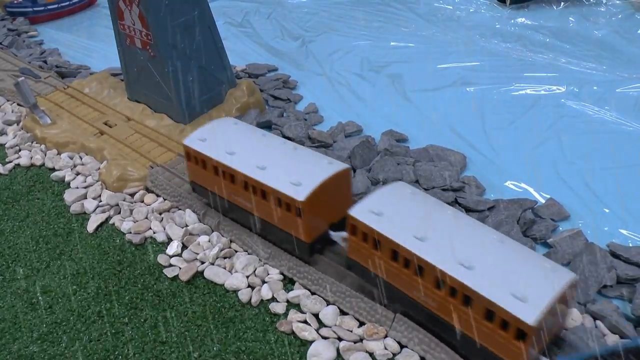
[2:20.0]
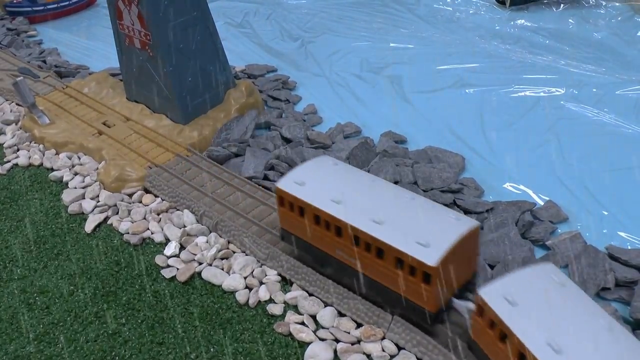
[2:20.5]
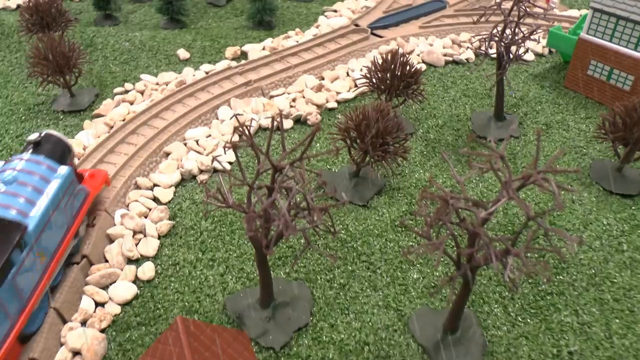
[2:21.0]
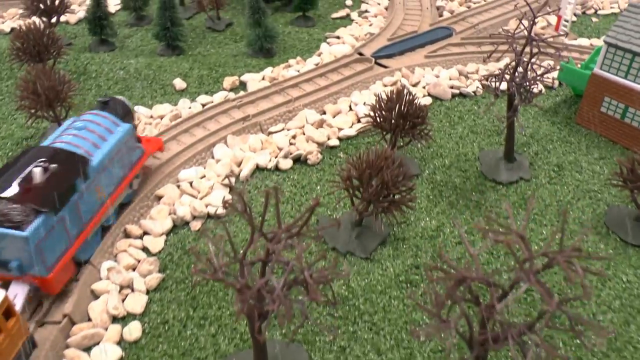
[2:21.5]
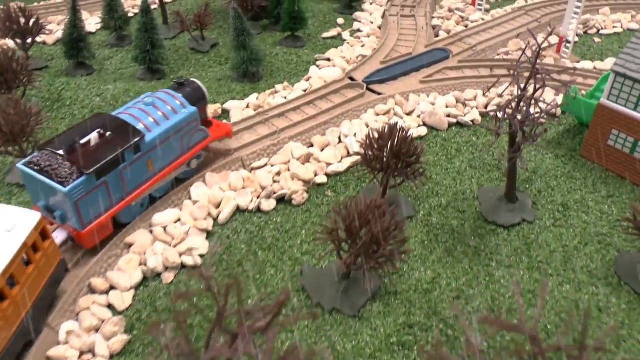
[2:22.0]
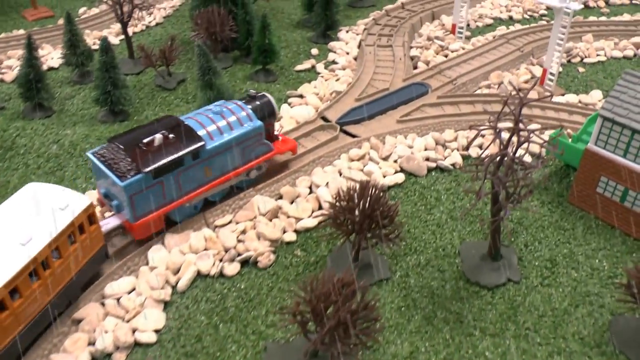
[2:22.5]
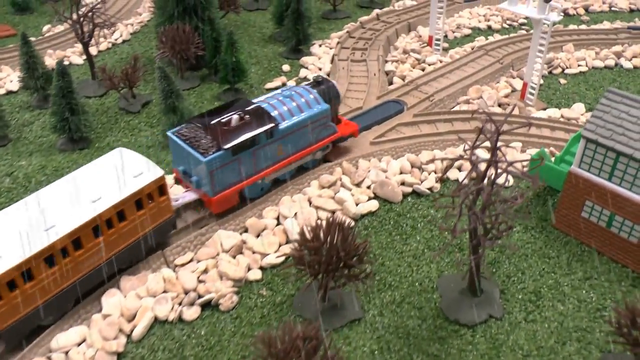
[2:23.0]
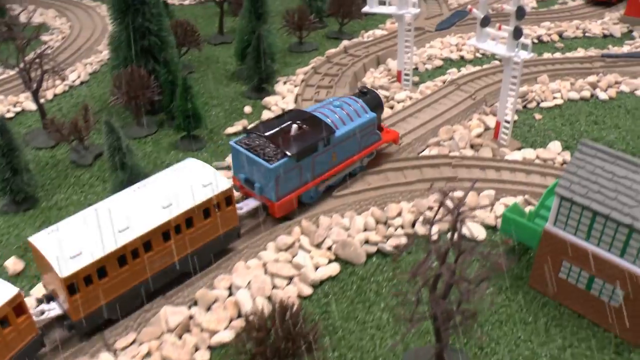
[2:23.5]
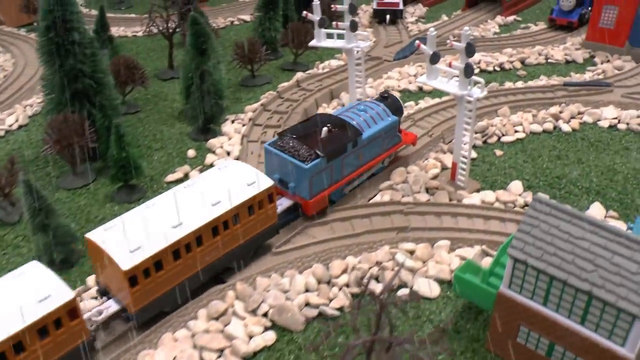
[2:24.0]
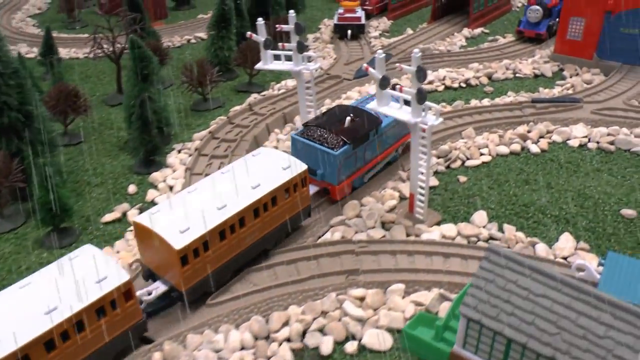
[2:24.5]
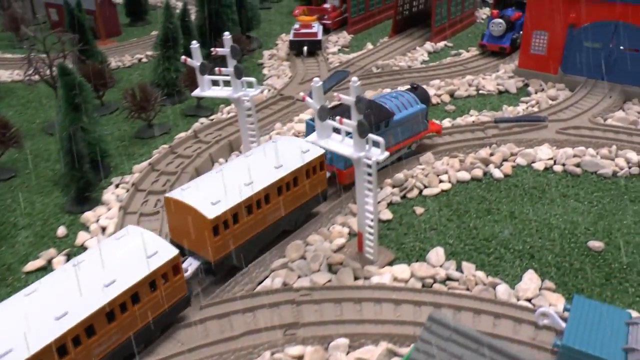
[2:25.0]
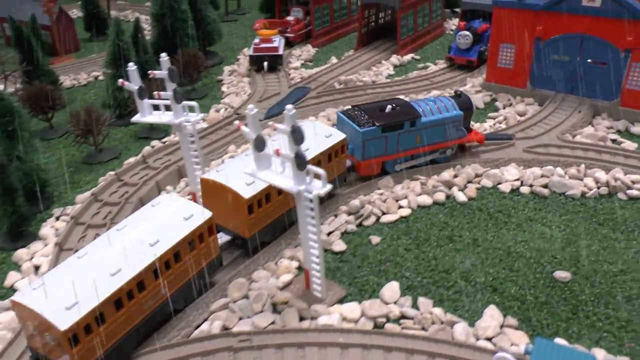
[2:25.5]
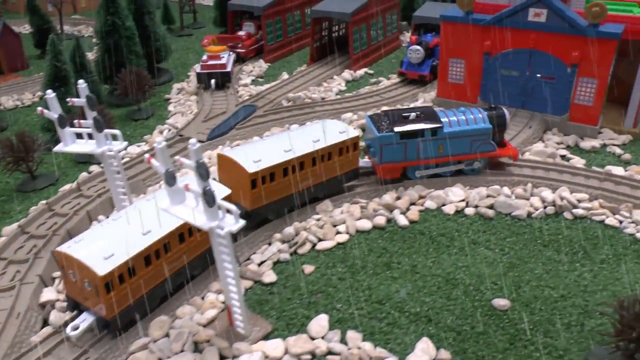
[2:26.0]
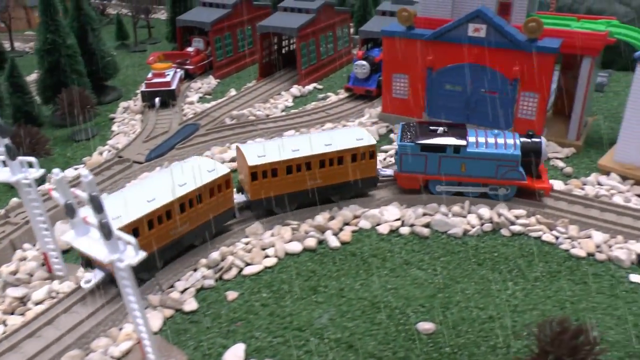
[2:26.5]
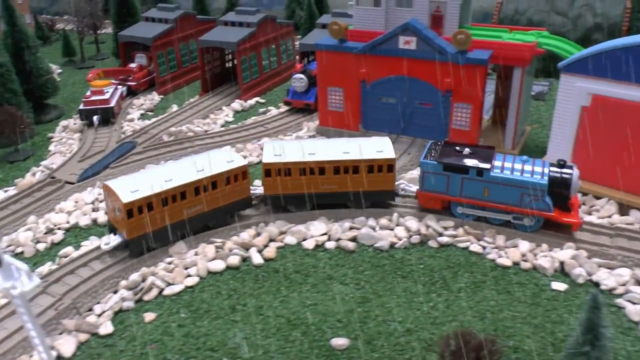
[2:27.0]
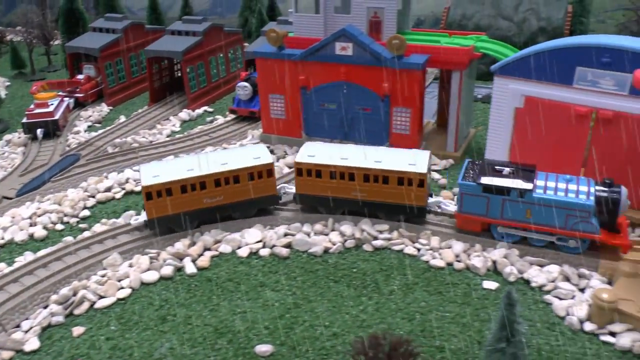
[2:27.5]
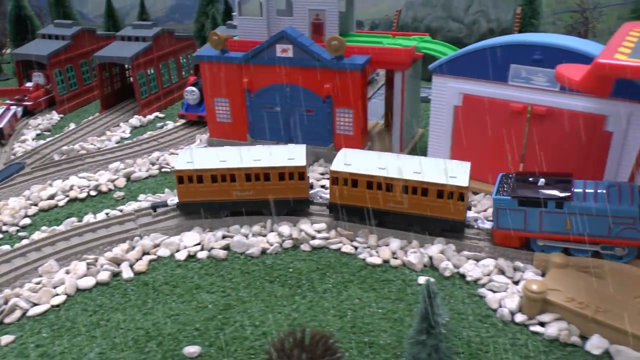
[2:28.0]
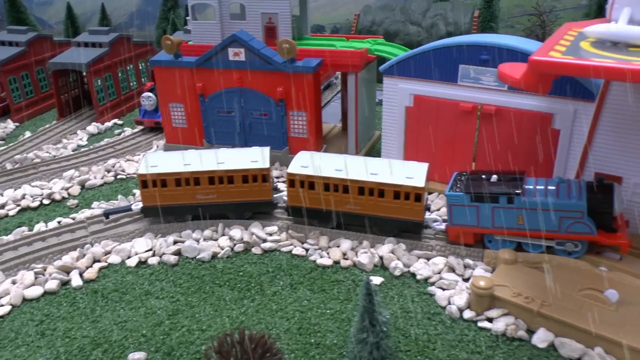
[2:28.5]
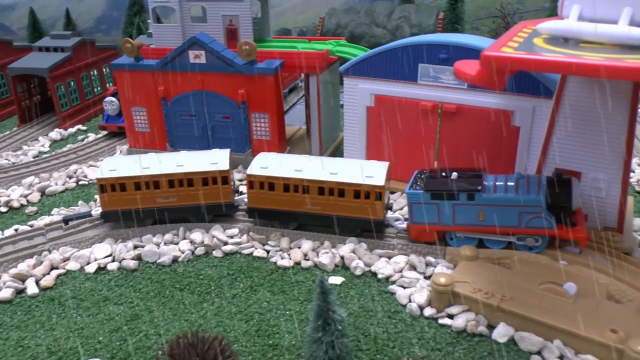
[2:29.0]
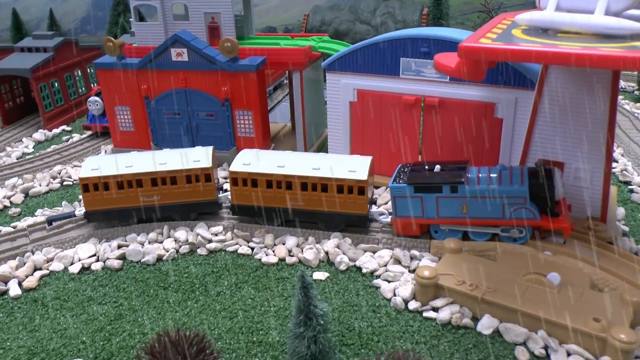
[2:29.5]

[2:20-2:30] The train is already off the bottom right corner, with the two other cars following behind it. Above it are the gray rocks and the blue water; down to the left are white rocks and green grass. It continues off the bottom of the screen, then comes up from a corner heading toward the upper right to a three-way junction where one track goes left, one goes right, and one goes straight. It goes straight, then comes to another fork: one track goes up to blue doors and one goes off the right side. It continues down the right side and goes in front of another white building with a blue top and red doors, where the airplane is parked above it to the right. The view pans to the right a little, and where the train tracks fork, a building is also visible at the end of those tracks as it turns to the right.